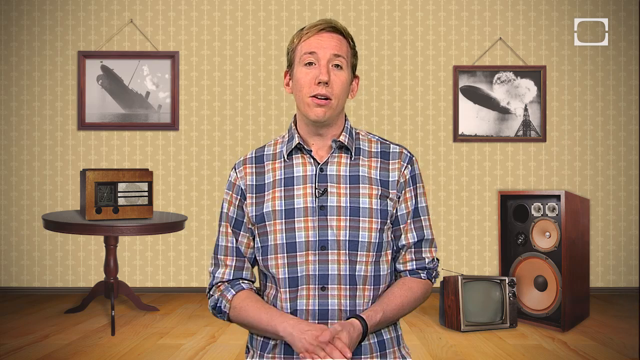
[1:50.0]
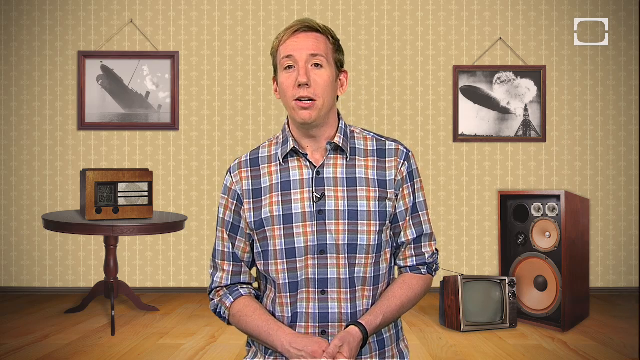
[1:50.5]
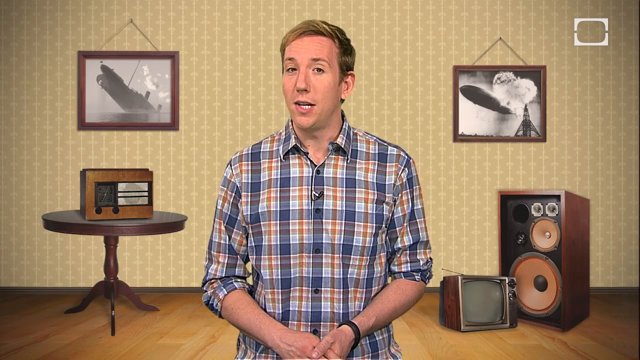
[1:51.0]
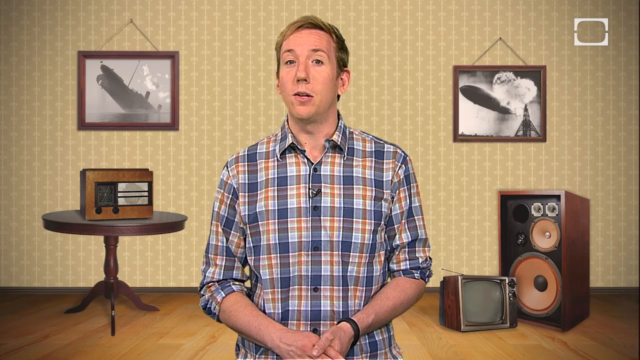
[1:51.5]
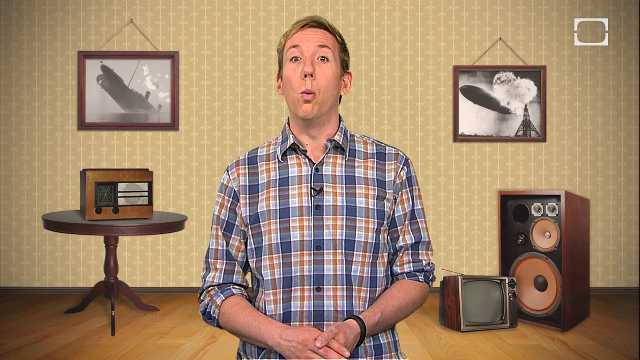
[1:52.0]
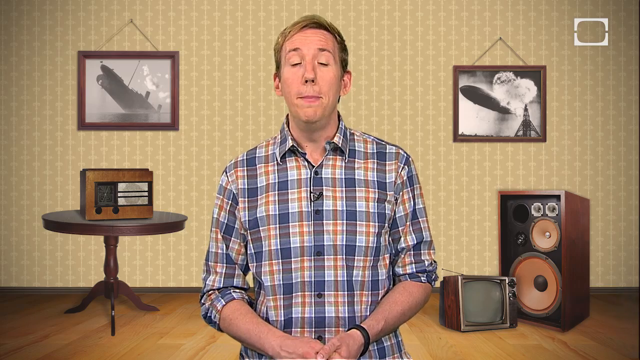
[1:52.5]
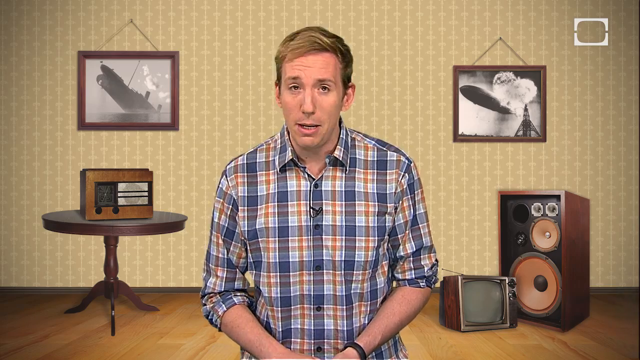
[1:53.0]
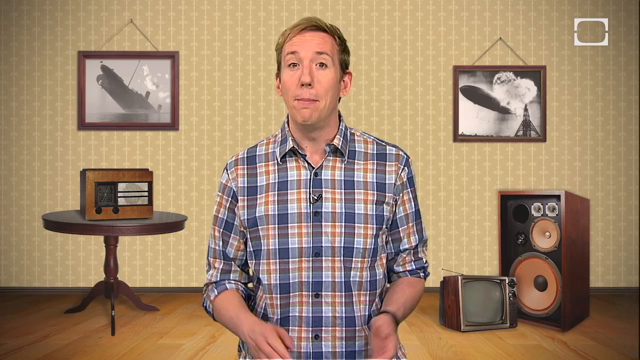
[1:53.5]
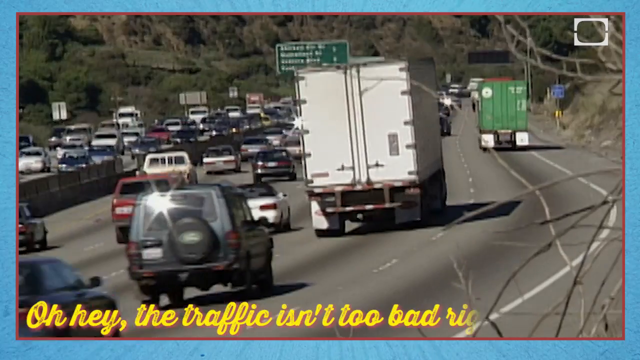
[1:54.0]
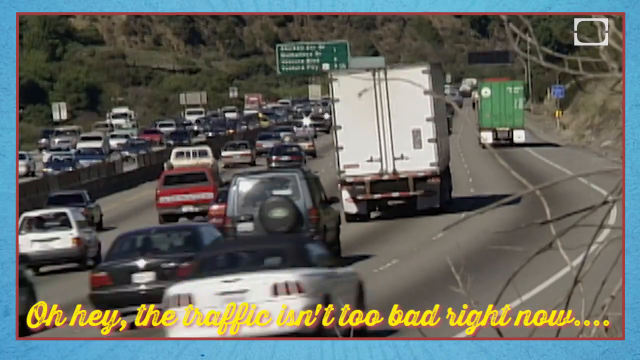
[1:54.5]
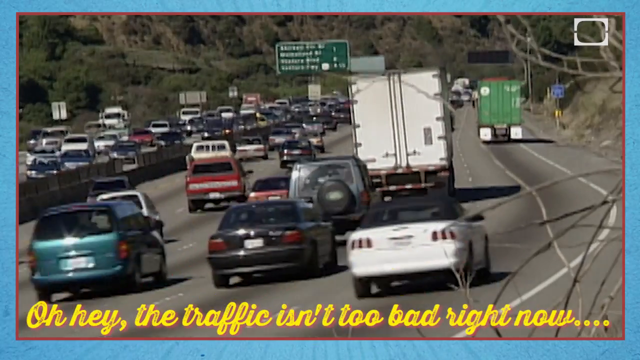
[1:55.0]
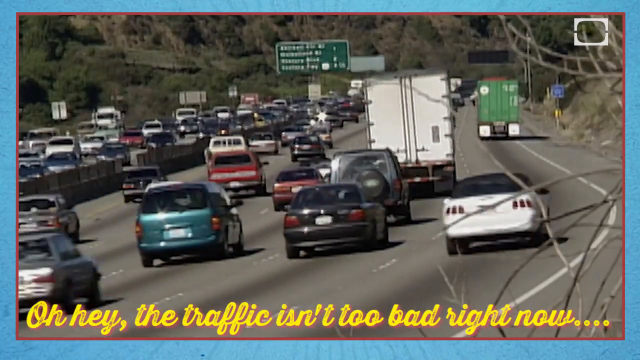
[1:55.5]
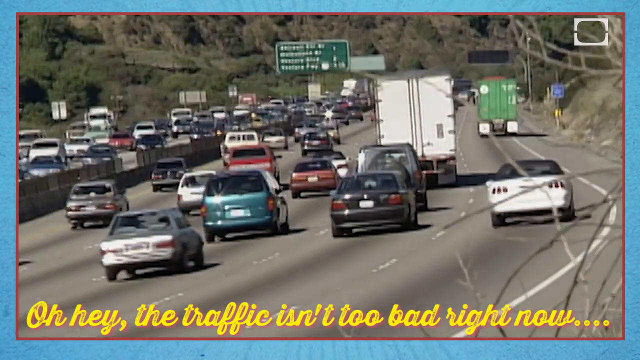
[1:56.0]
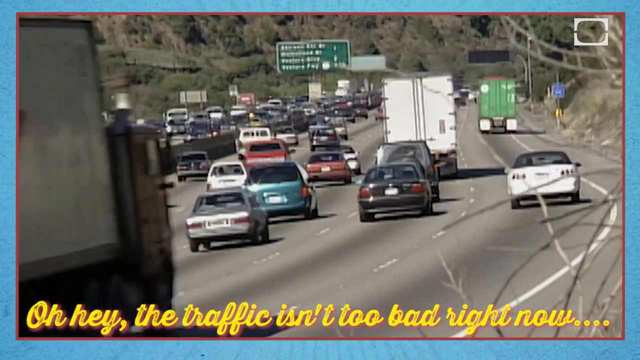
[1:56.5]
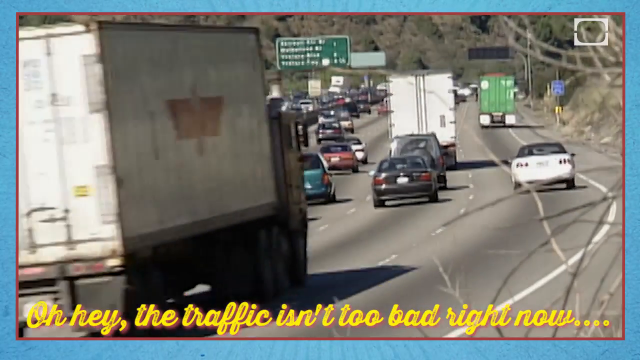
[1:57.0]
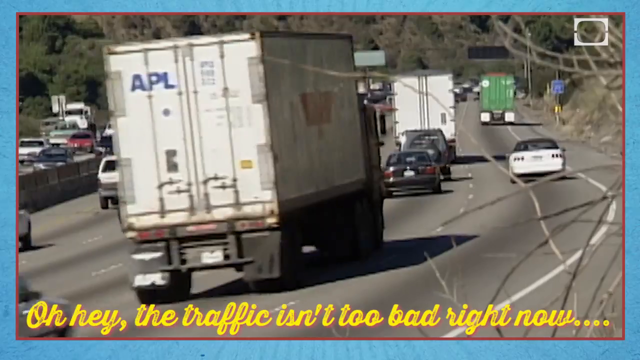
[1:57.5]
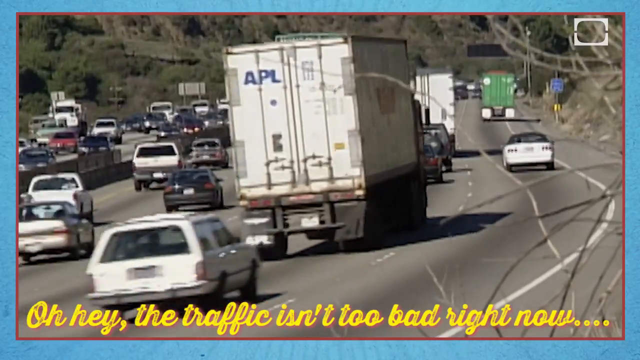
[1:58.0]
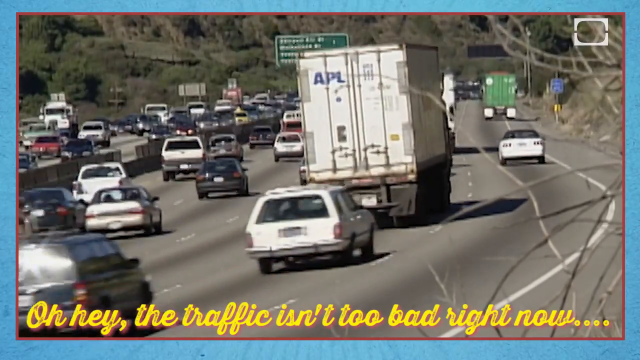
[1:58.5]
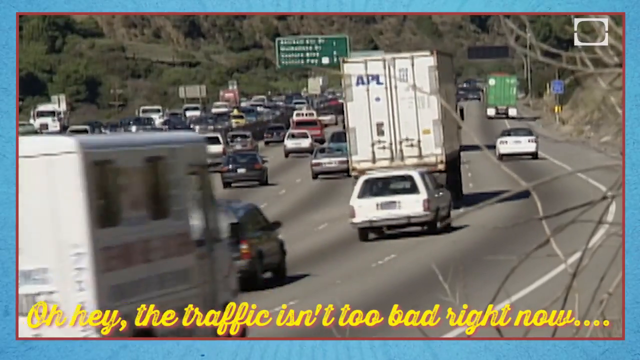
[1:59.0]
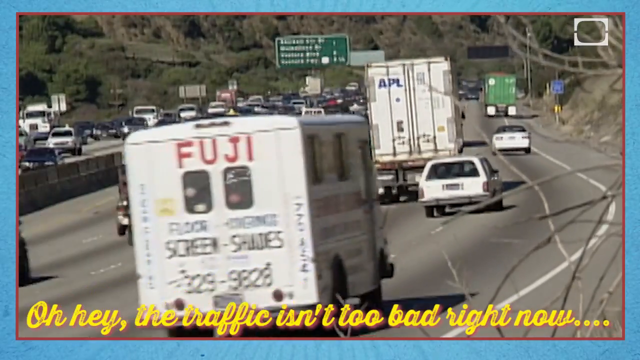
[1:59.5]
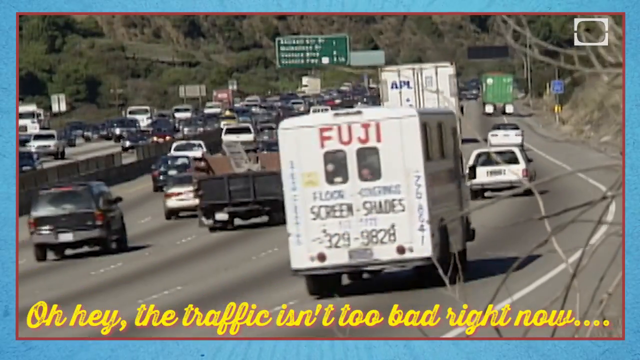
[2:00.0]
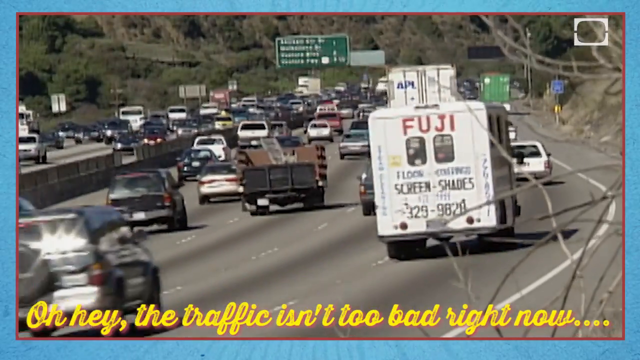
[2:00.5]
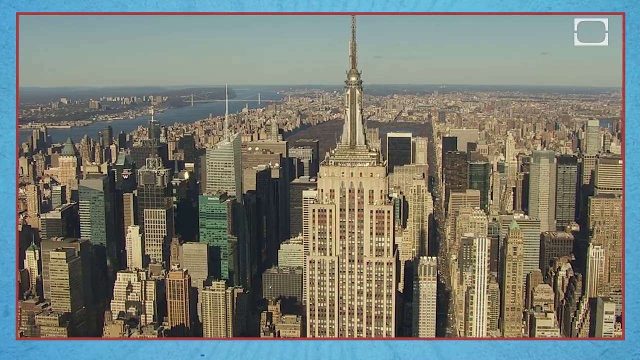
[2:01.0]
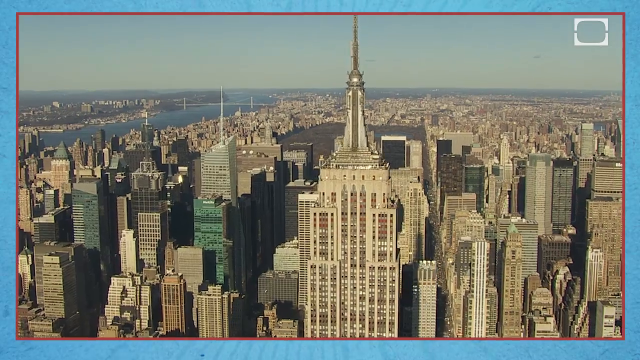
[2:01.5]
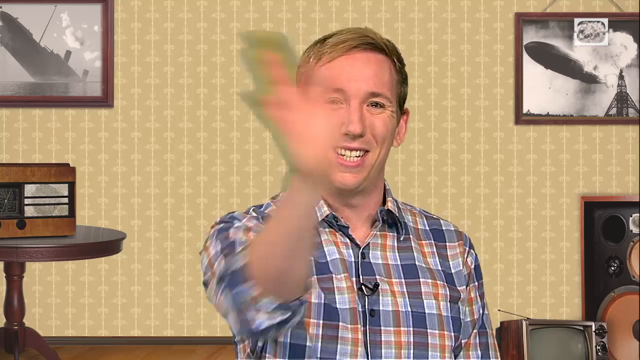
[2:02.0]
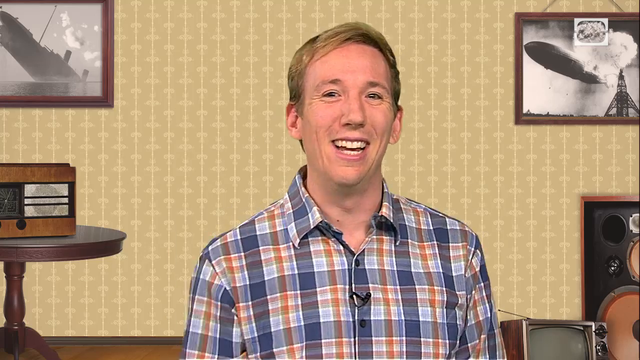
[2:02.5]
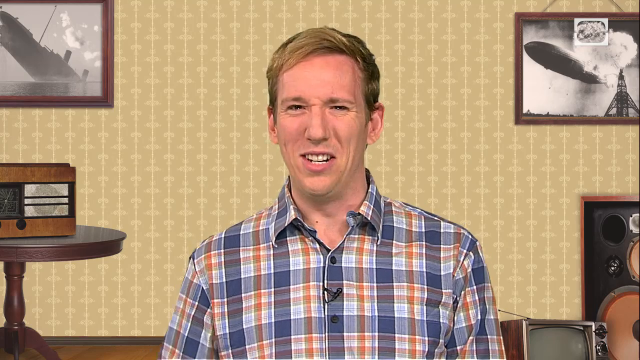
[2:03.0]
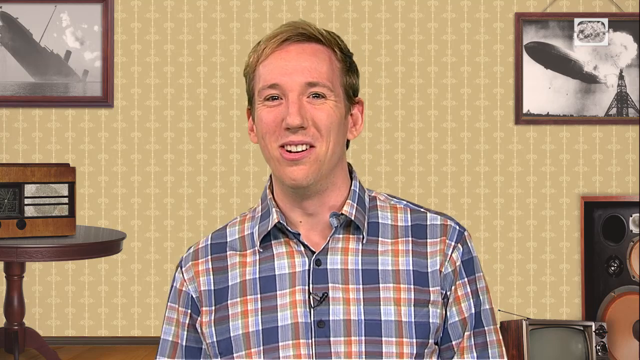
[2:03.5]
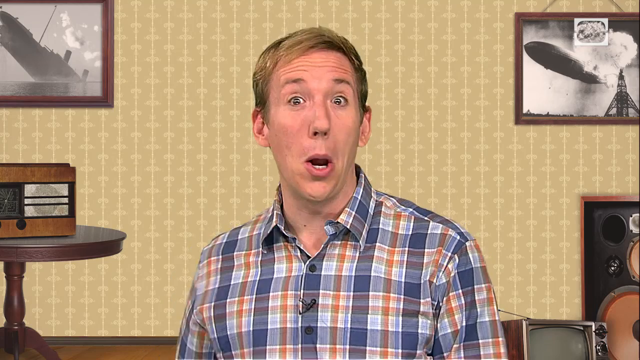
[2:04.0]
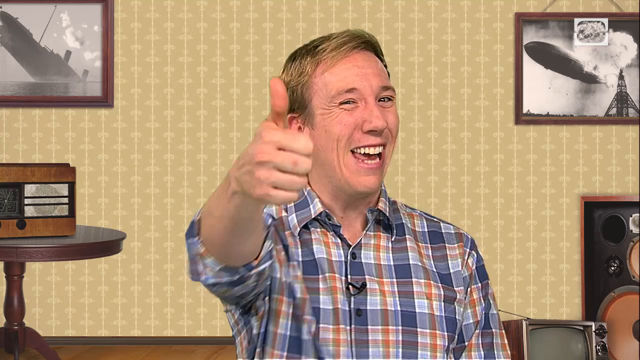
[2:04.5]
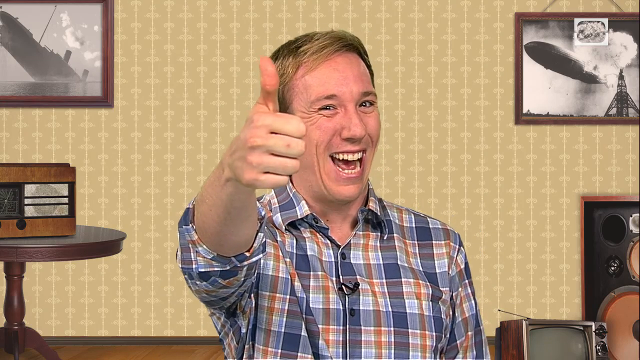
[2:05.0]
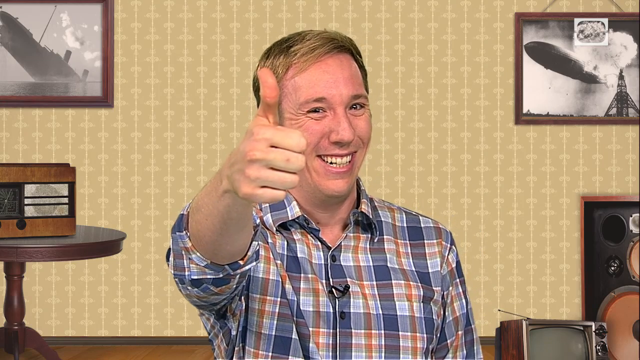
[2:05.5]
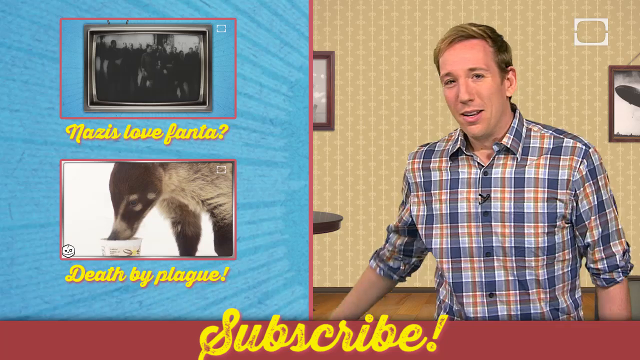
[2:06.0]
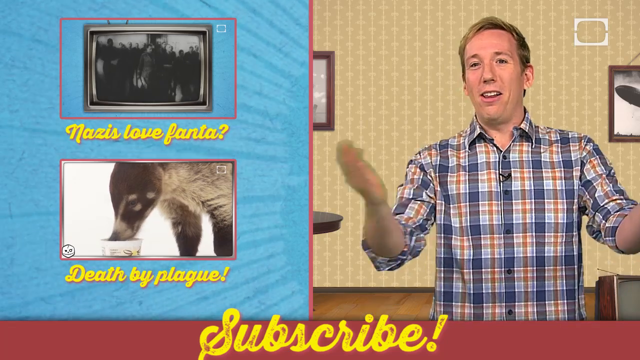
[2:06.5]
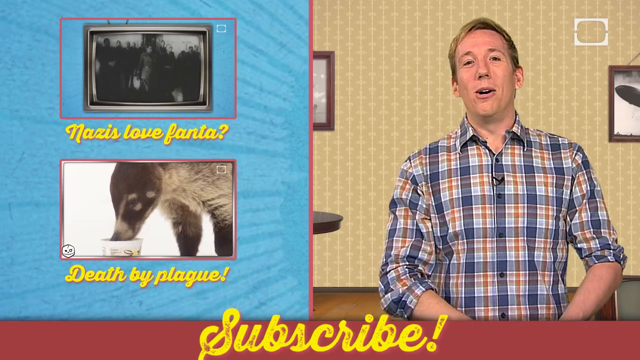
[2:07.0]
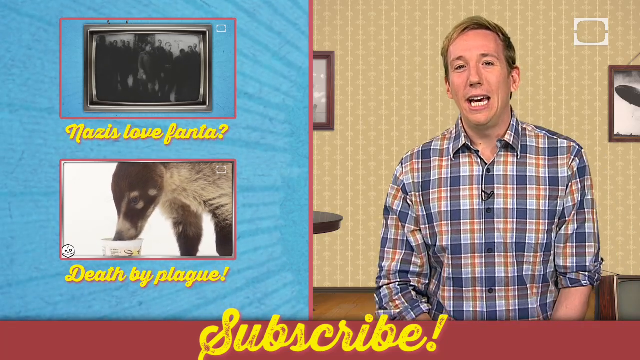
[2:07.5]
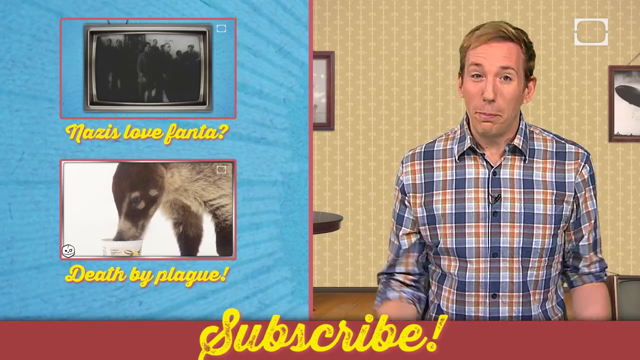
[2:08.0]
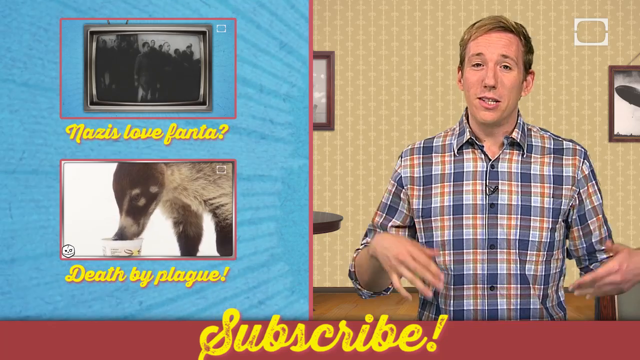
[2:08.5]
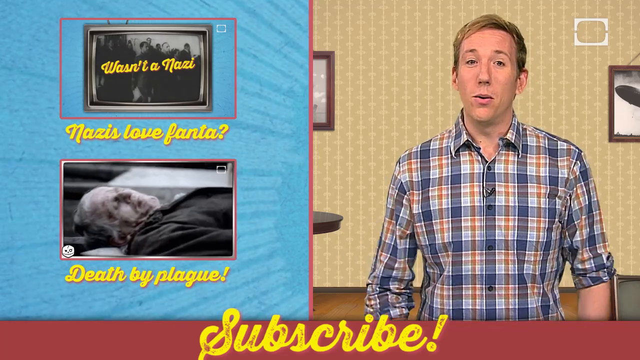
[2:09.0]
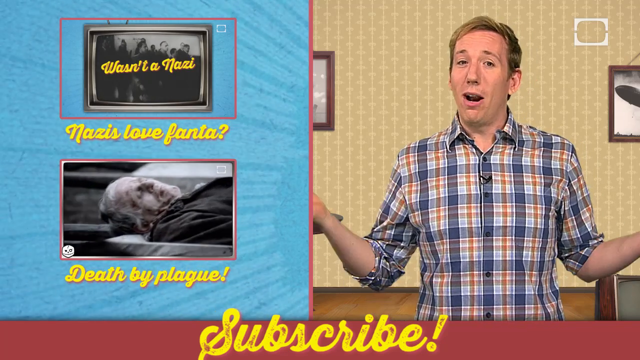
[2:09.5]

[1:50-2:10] Scott is still talking at the beginning. Then footage of highway traffic appears with text at the bottom reading "oh hey the traffic isn't too bad right now." The right side has not many cars and moves freely at a consistent speed, while the left side has a lot more. Next comes a sky view of apparently San Francisco showing the very top parts of the buildings, almost like helicopter footage. Scott appears again, looking really happy, and gives a thumbs up with his right hand. The video then moves into its ending part, an end screen with two videos on the left.